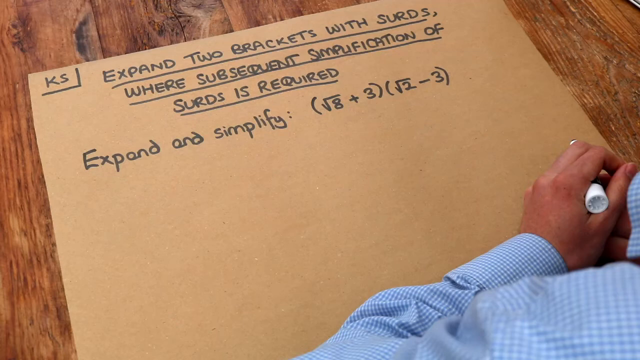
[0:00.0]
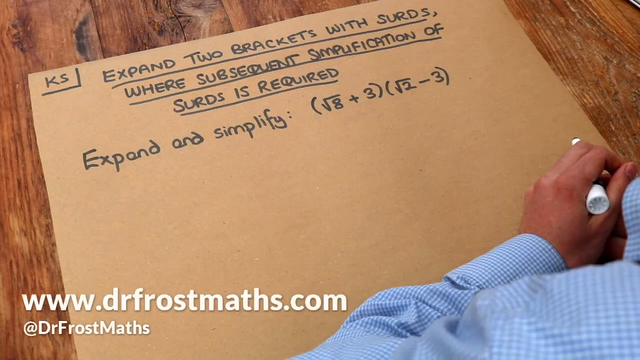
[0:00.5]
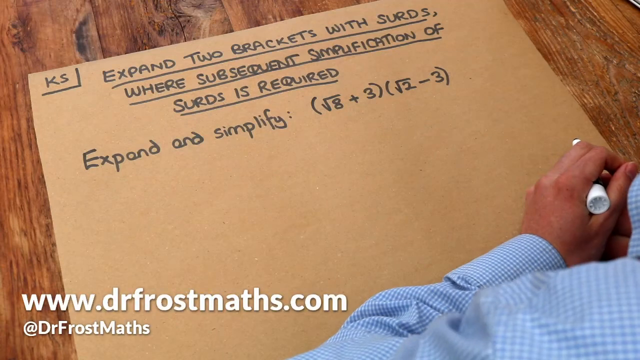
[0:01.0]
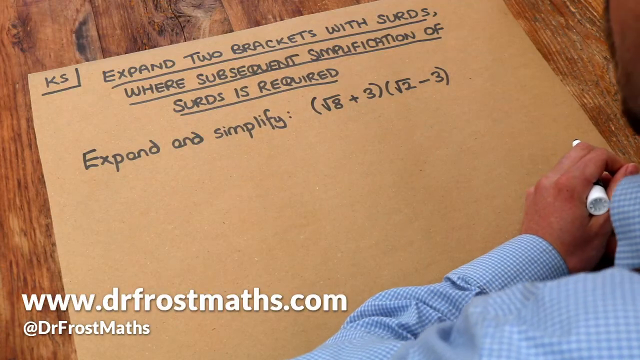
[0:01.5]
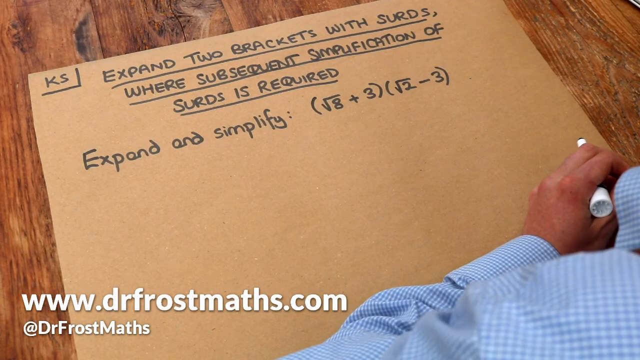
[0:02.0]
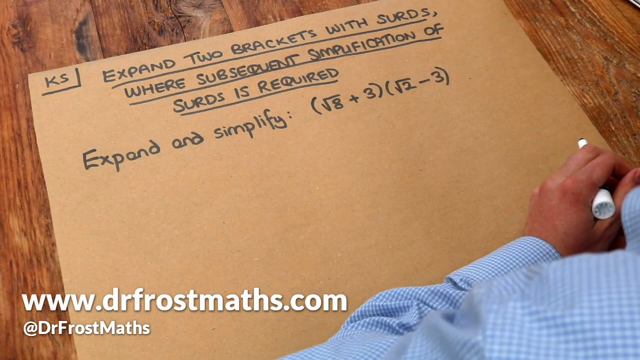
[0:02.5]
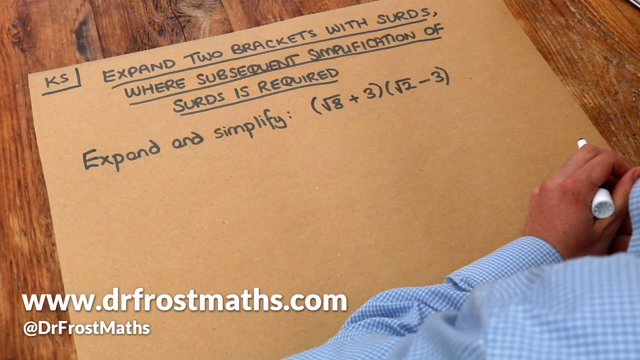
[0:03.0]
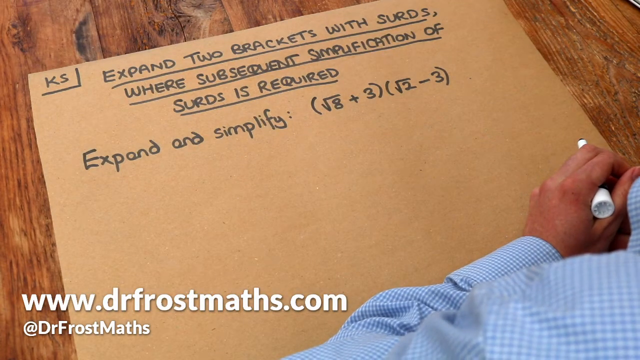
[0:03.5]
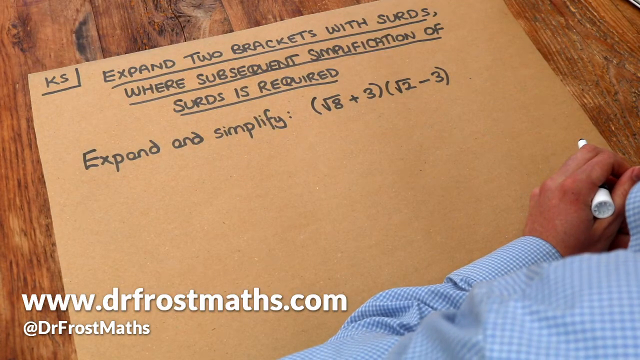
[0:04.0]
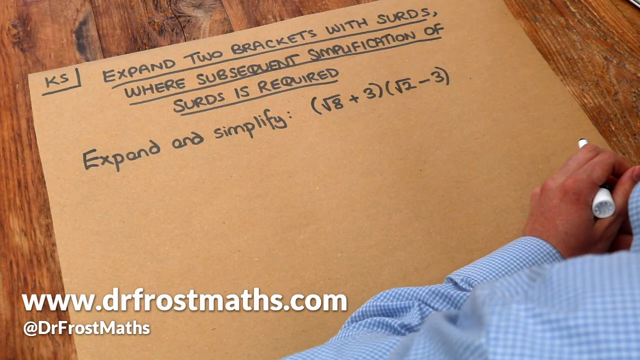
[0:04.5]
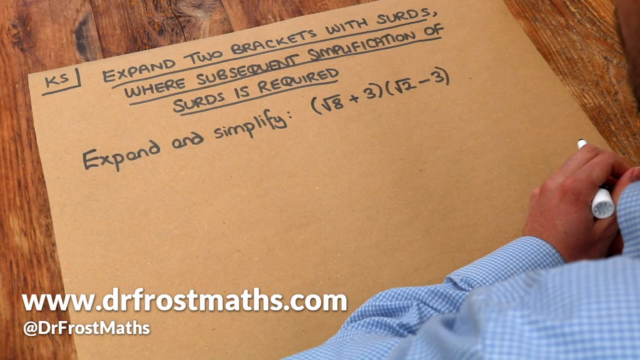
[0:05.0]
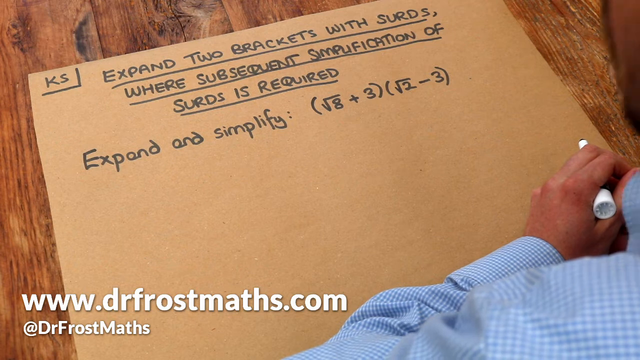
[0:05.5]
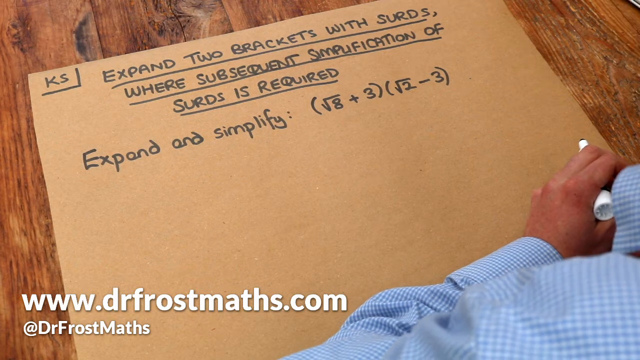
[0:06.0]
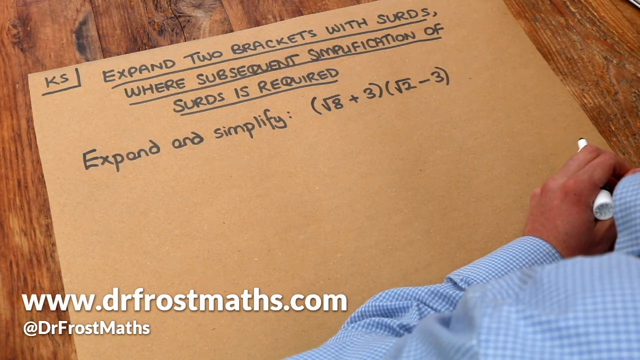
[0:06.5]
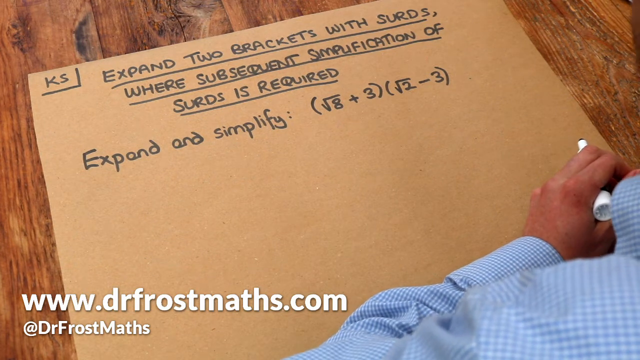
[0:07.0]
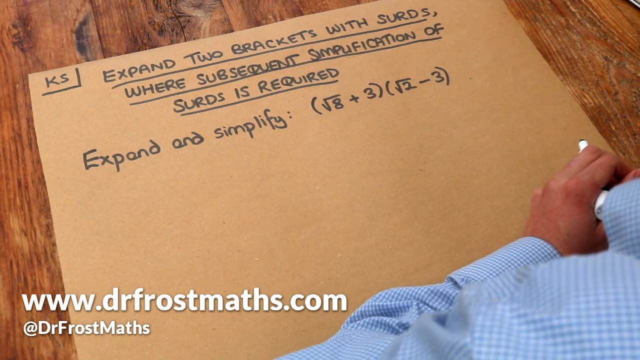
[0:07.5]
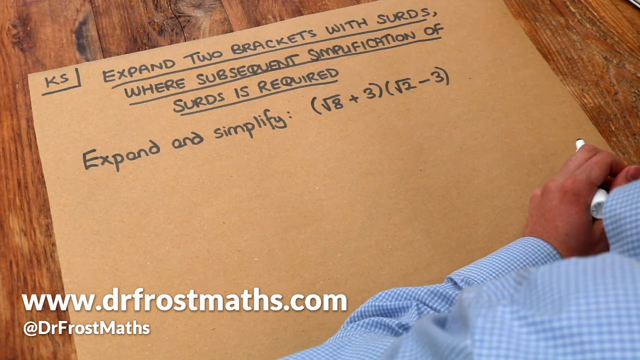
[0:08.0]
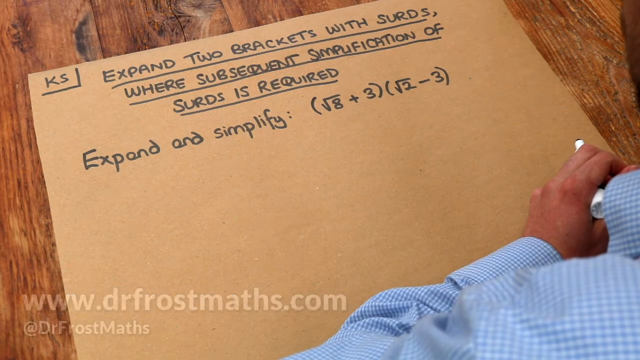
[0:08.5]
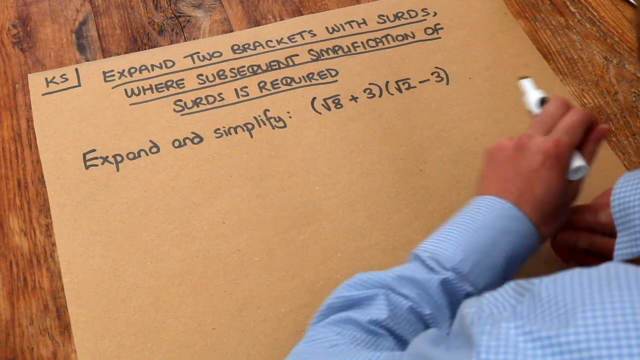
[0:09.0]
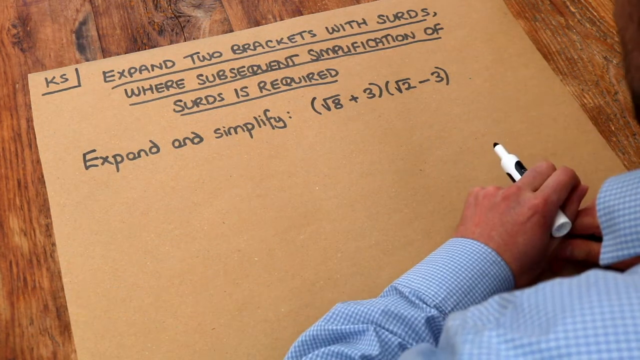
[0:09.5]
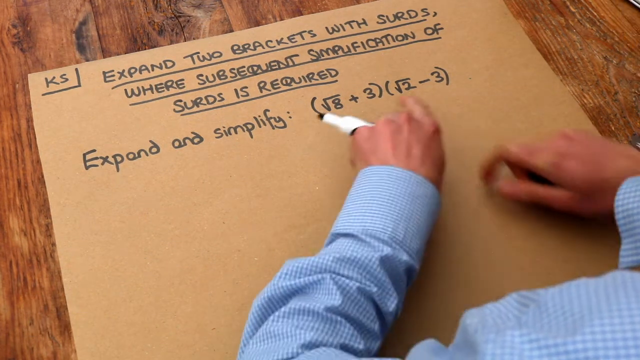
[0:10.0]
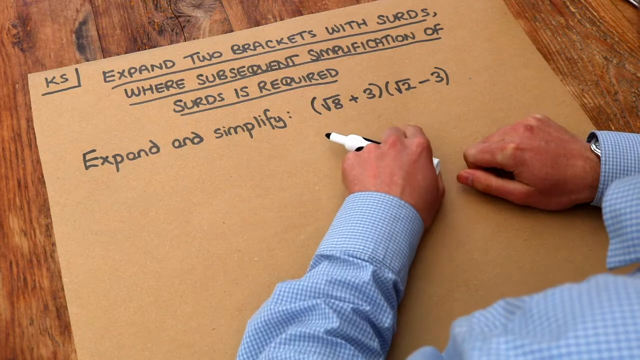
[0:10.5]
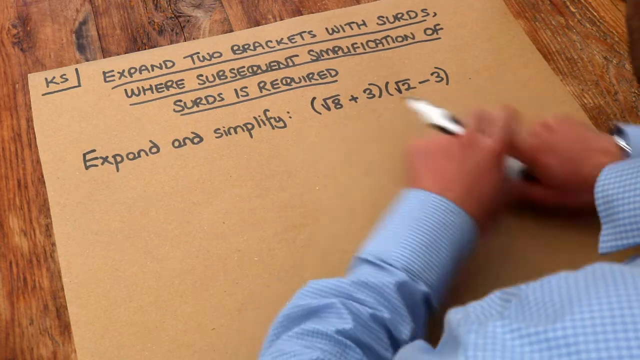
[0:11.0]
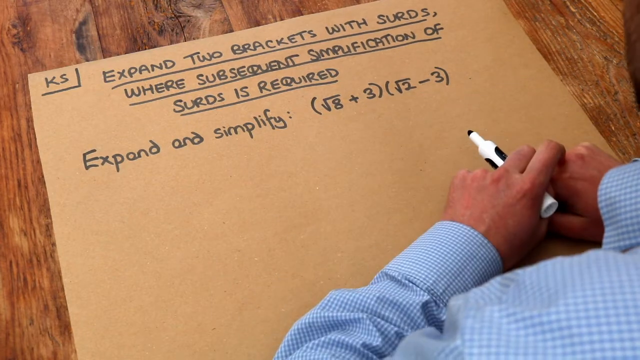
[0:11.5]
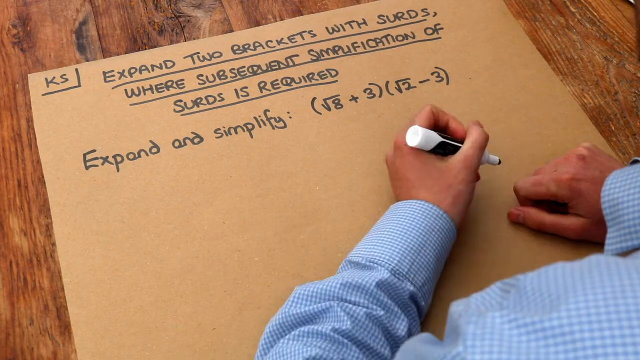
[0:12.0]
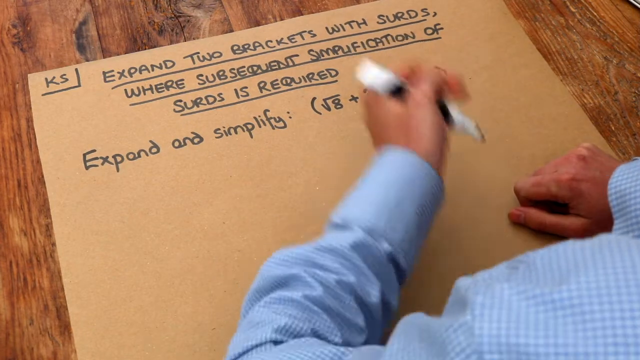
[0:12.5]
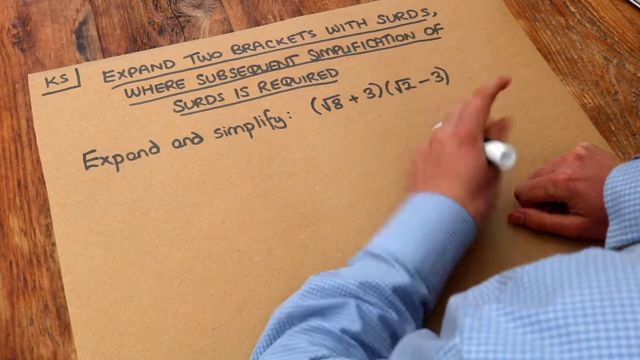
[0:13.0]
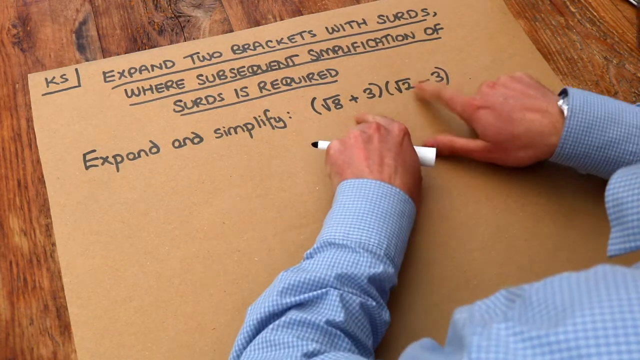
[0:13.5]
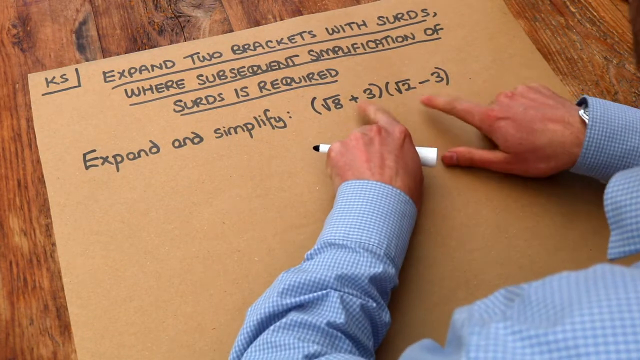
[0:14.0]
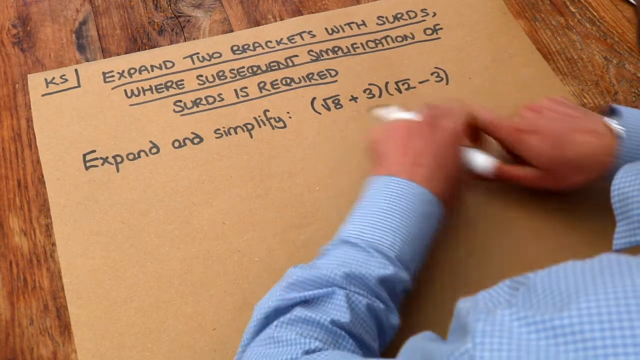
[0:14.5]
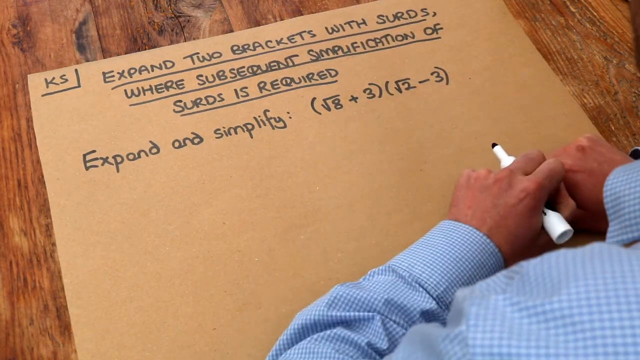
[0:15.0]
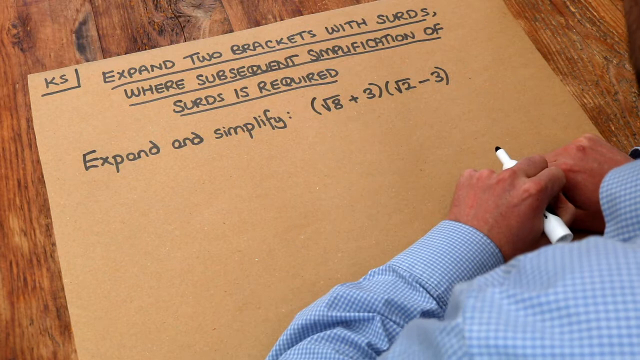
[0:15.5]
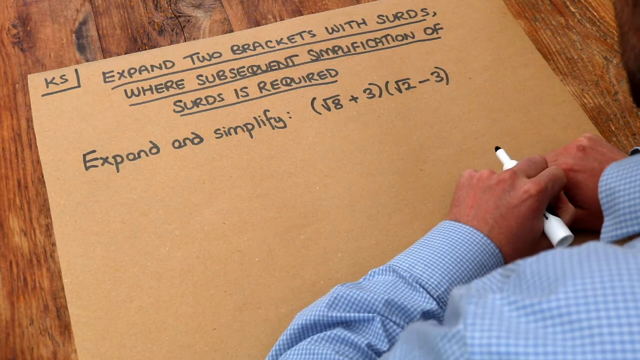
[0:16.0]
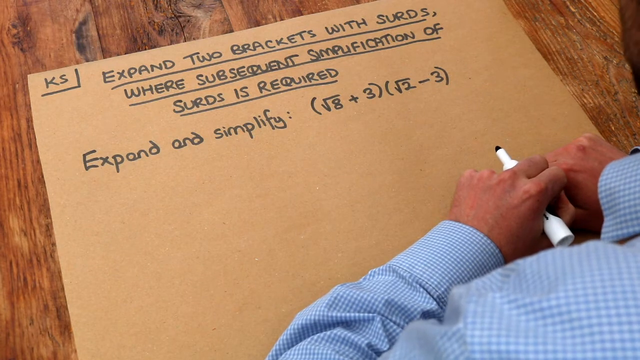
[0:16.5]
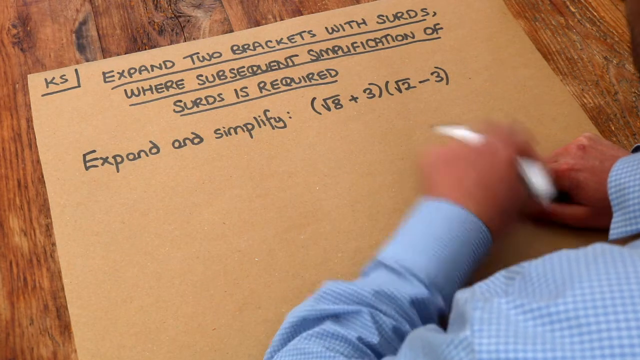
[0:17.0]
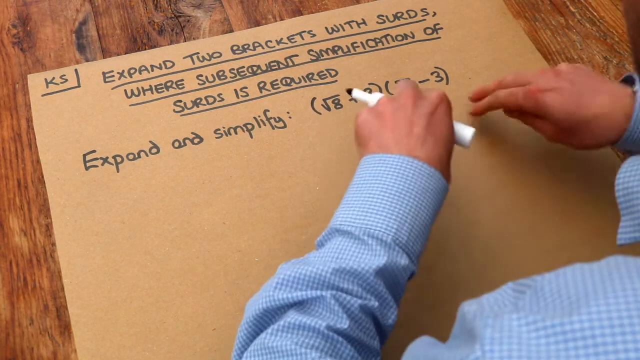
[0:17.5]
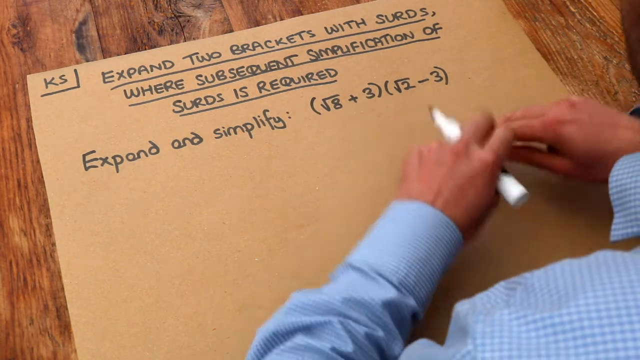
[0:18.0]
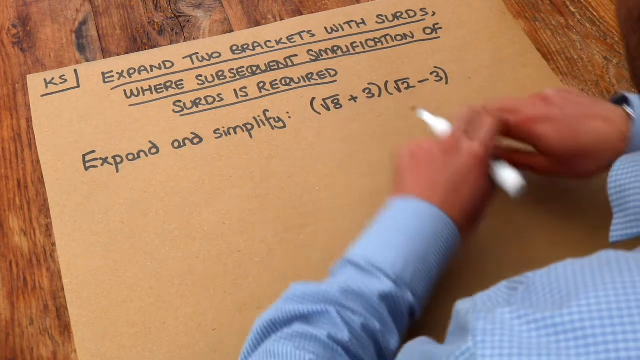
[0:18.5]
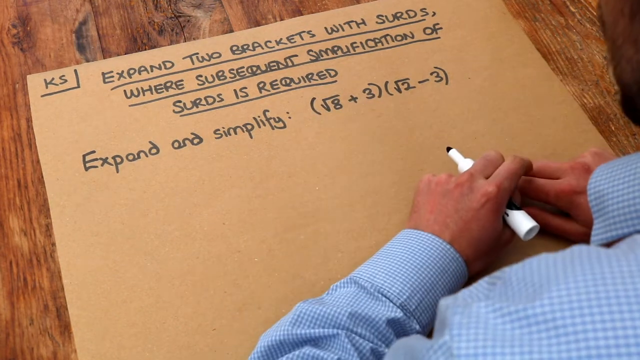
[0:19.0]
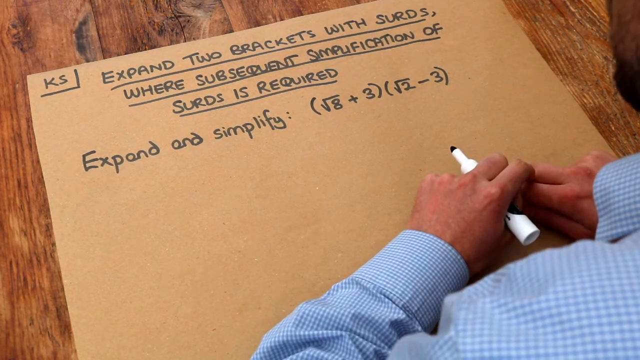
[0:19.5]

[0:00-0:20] The view looks down over someone's left shoulder, which is in the bottom right corner. A little of the collar comes in, and the shoulder runs toward the left to the center and then angles up; the sleeve is long and blue and white. The side of a hand is visible: the side of the pointer finger, a little of the middle finger from under it, the thumb side and the thumbnail, and between them what looks like a marker, whose white end shows. In front is a brown piece of cardboard on a hardwood table whose slats run up and down. The cardboard is angled higher on the right and goes off the upper right corner, while its left corner is about an inch from the left side and about an inch and a half from the top. In its top left corner it says "KS", half boxed in by a line that comes from the top, goes down and over to the left. In all-capital black lettering it reads "expand two brackets with SURDS" (underlined), then on the next line "where subsequent simplification of" (underlined), then "SURDS is required" (underlined). Back toward the left it says "expand and simplify", followed by the square root of eight plus three in soft brackets and the square root of two minus three in soft brackets. In the bottom left corner, in white, it says "www.drfrostmaths.com" and "@DrFrostMaths". The shoulder and a little of the face move around on the right side. The hand moves up a little, revealing the front of the marker under the middle finger: it is white with a little black around the center and a black tip. The other hand comes in laying flat, showing the back of the hand, the side of the thumb and a little of the fingers. A hand then moves up, points at the two items in the brackets, kind of circles around, moves back up, points at the brackets, comes back down near the chest, and points up at the brackets again, this time with two fingers.